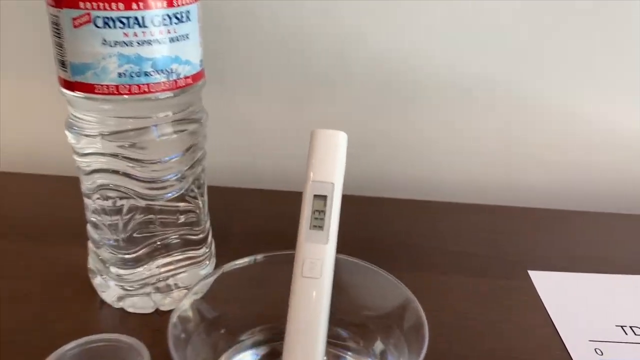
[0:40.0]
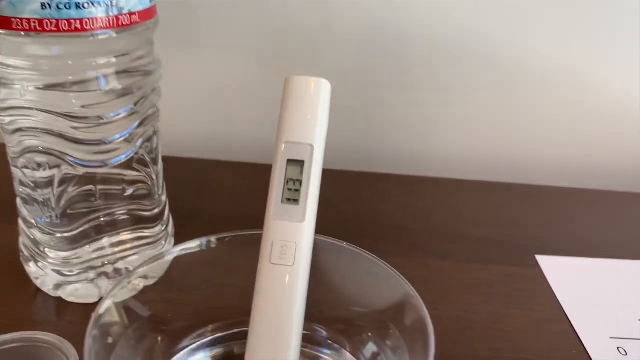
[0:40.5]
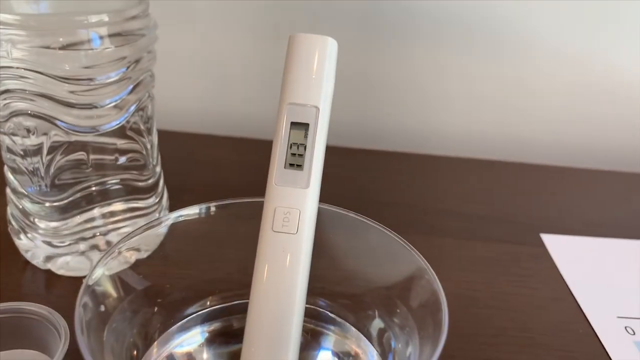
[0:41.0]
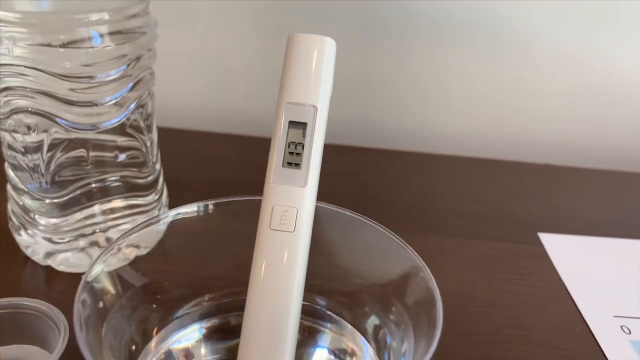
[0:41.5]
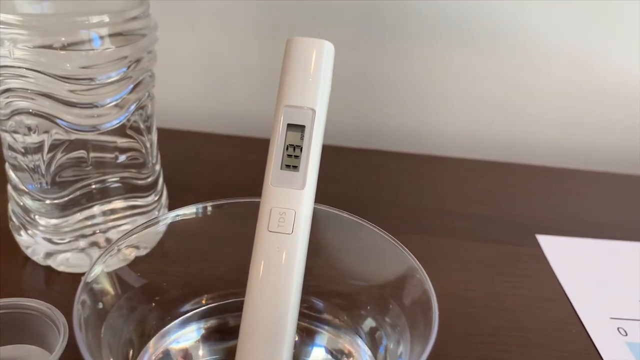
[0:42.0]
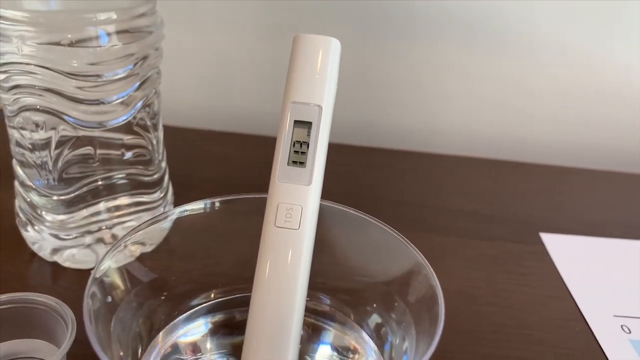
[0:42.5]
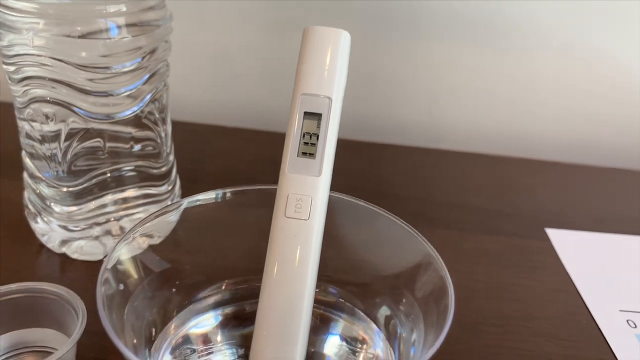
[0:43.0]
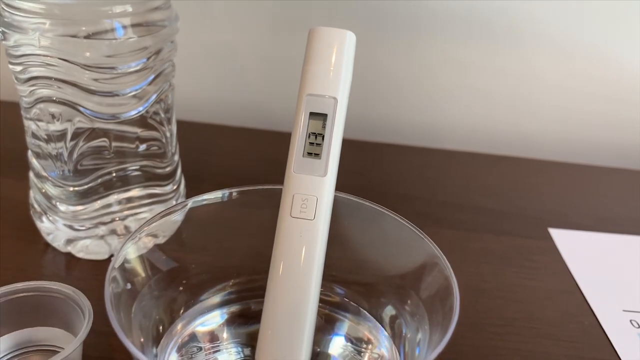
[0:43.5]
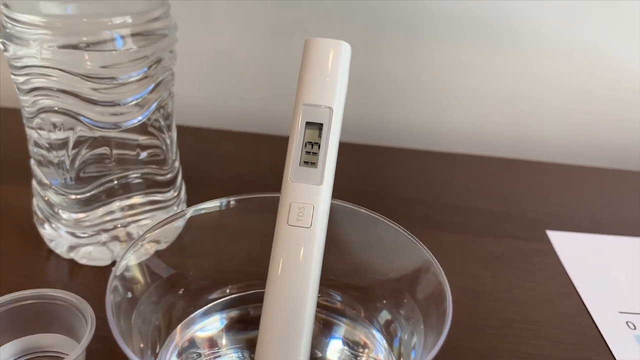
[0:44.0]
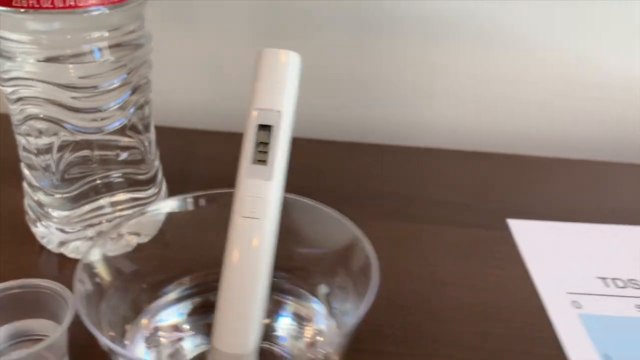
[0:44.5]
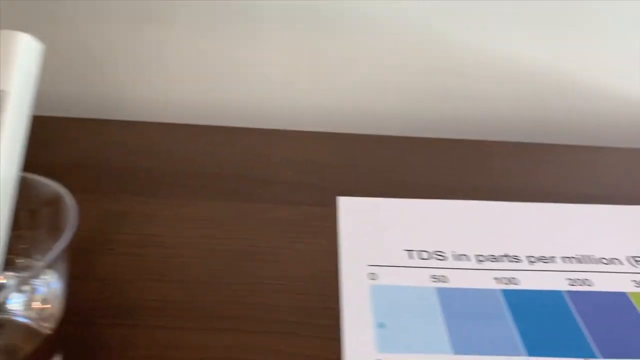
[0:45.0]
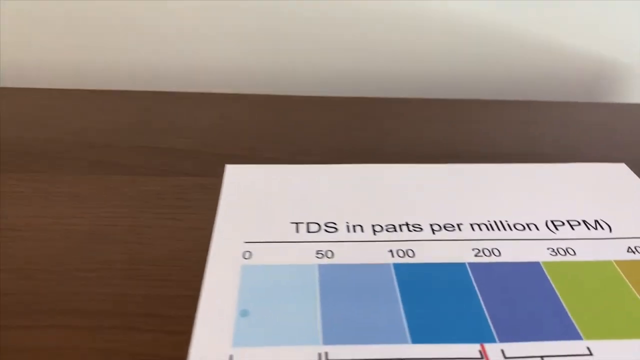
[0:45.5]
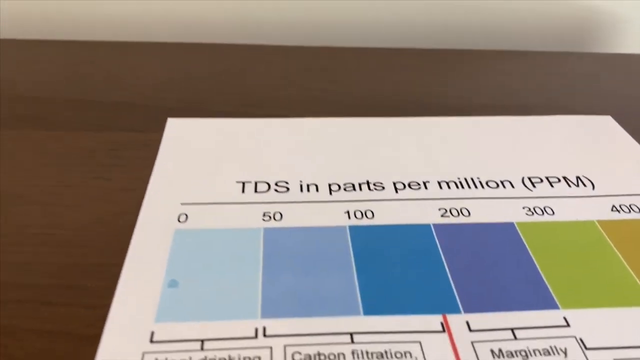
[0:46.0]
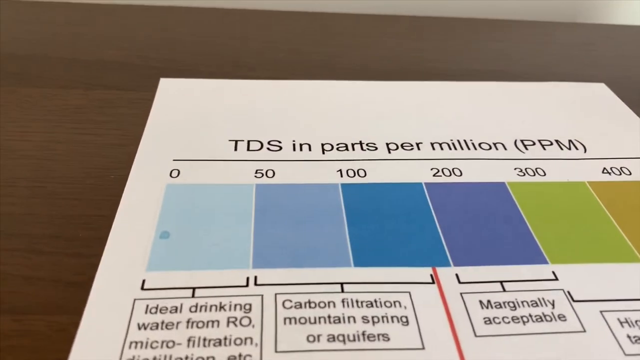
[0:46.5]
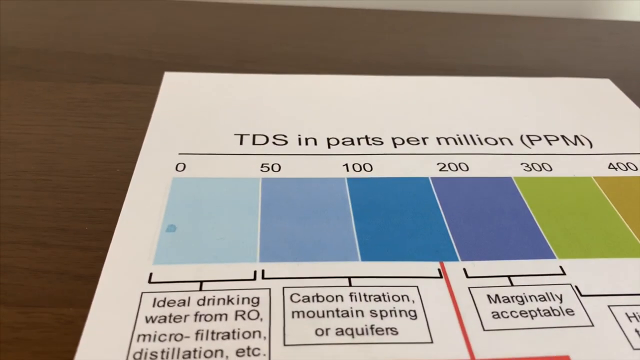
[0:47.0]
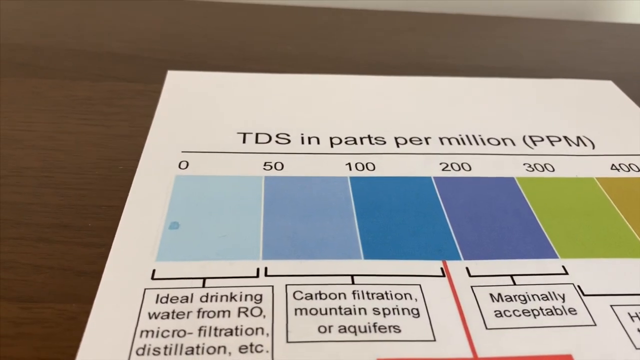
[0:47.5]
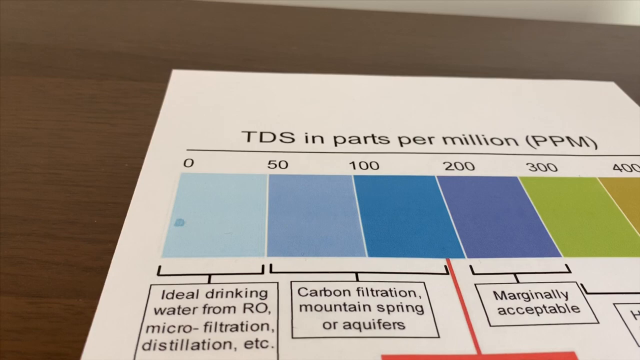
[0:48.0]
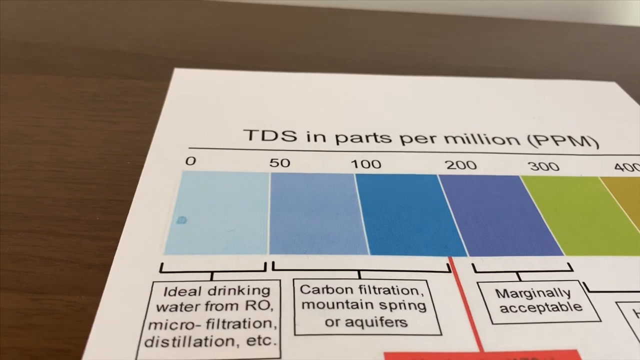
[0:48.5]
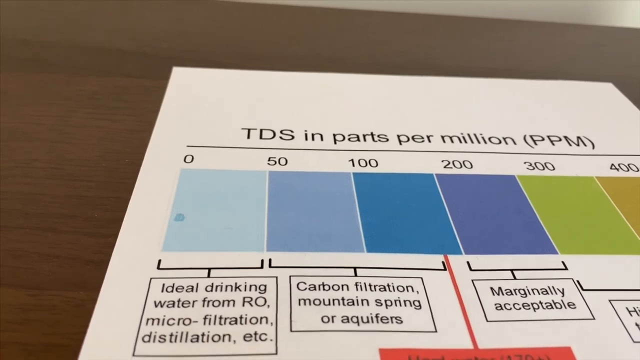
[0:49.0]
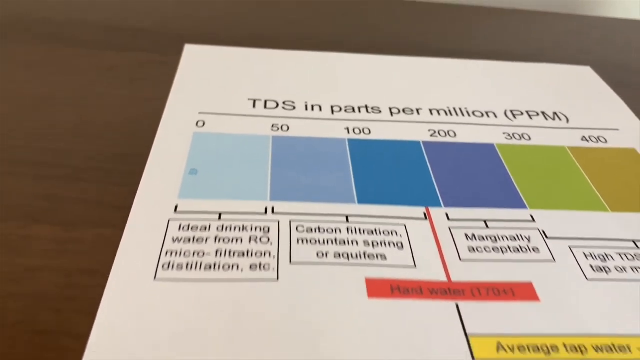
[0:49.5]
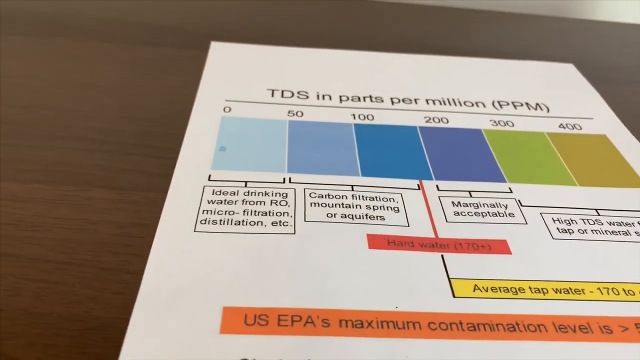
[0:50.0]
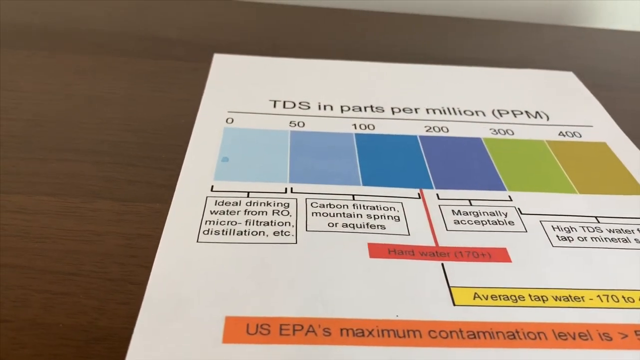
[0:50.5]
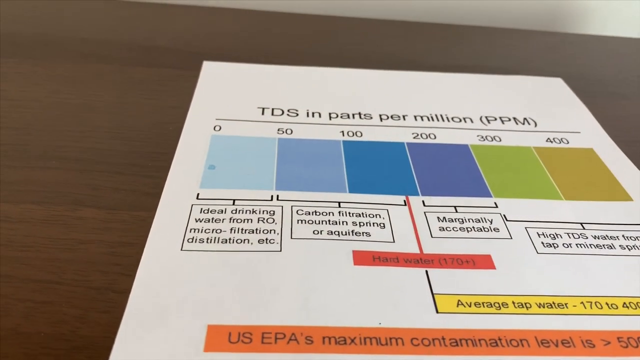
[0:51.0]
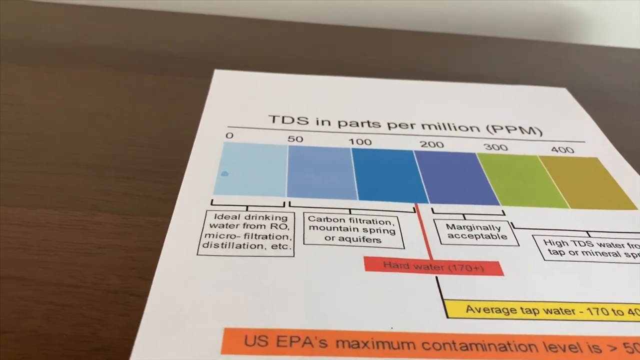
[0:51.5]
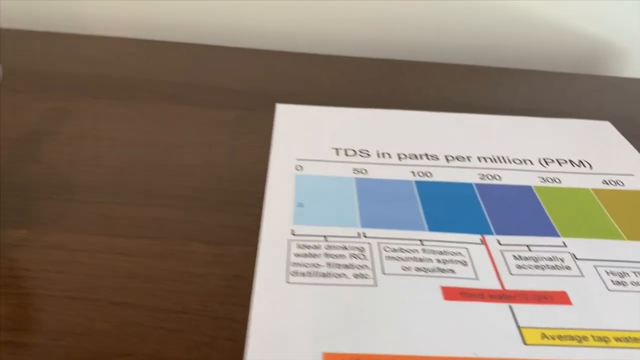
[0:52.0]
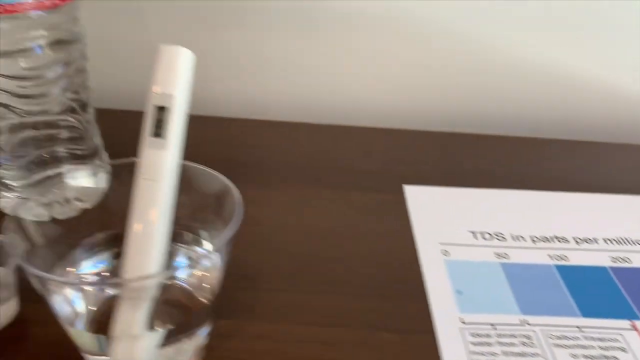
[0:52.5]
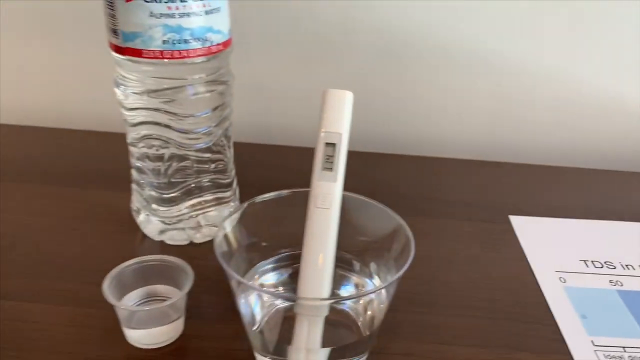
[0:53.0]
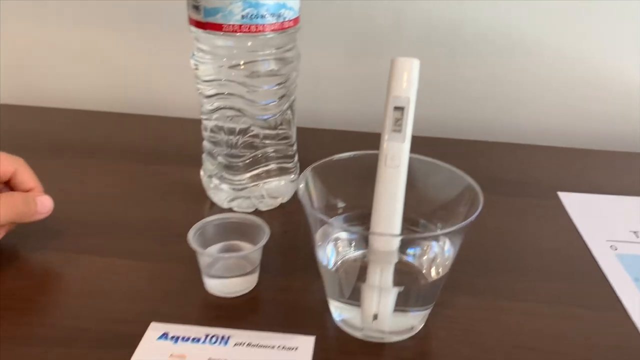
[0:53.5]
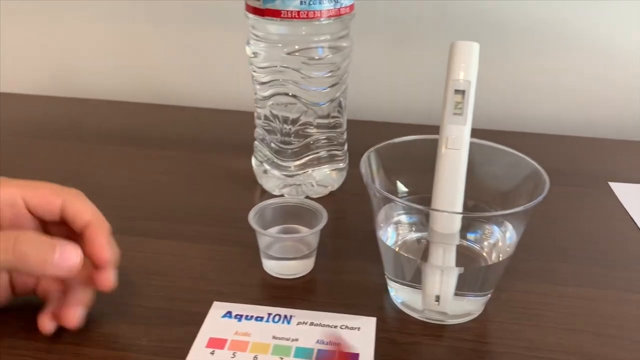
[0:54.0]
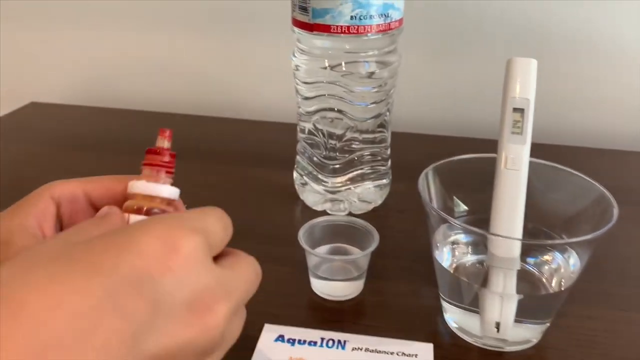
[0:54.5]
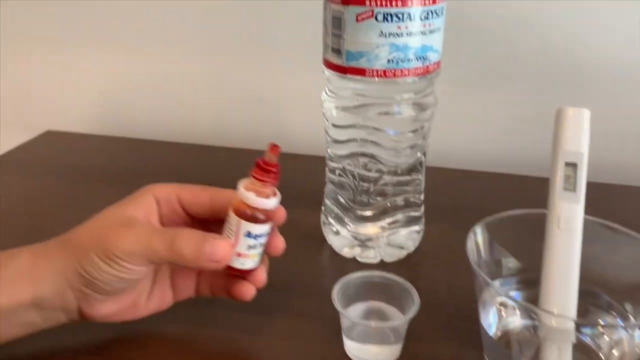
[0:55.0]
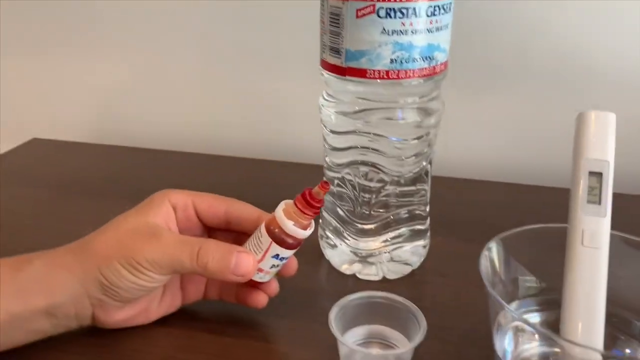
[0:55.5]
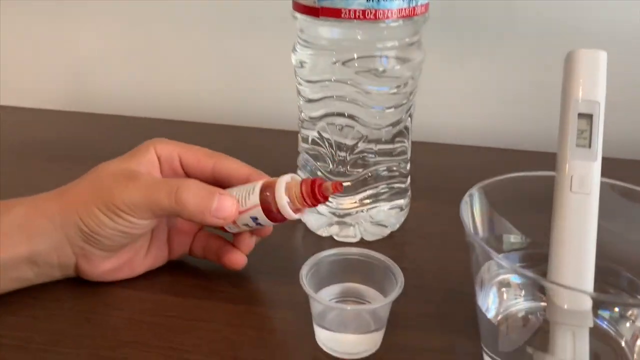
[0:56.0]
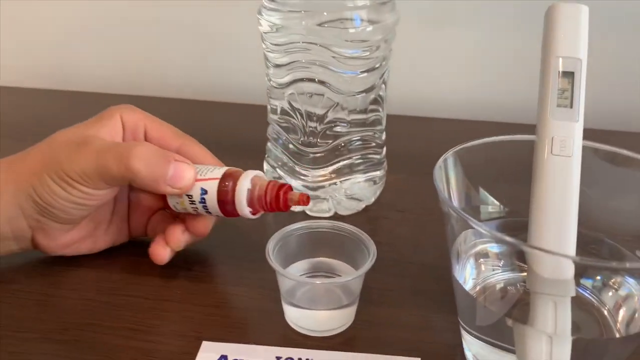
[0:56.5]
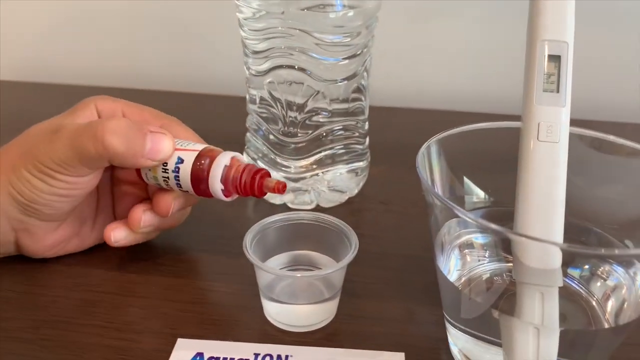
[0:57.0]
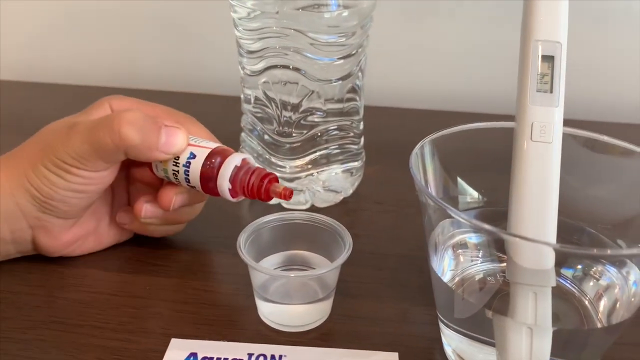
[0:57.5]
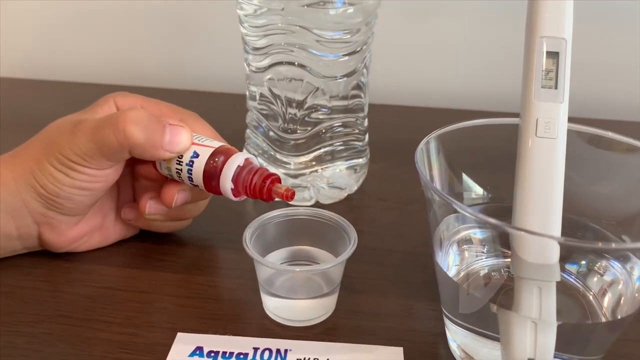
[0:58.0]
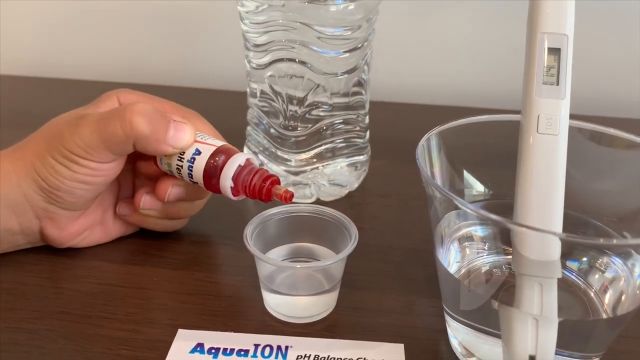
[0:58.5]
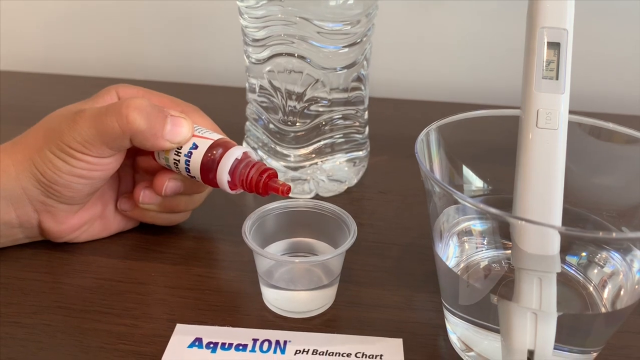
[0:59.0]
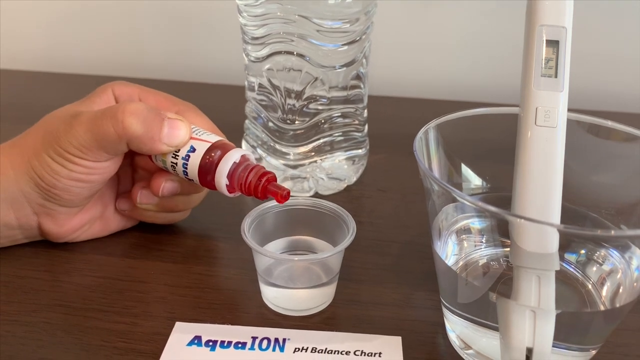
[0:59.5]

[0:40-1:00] The camera focuses on the TDS stick in the water, showing "113 ppm". The camera then moves to the right to a piece of paper on the table that says "TDS in parts per million, ppm". It has a color chart ranging from 0 to 400, marked 0, 50, 100, 200, 300 and 400, with colors starting in light blue and going toward something like olive green. Underneath are descriptions of drinking water for different TDS values: for example, 0 to 50 is ideal drinking water from RO, microfiltration, distillation, etc.; 200 to 300 is marginally acceptable; and values of 300 and 400 indicate high TDS water. The camera goes back to the cups of water, and the hand takes red drops and puts them into the small medicine cup with water in it.